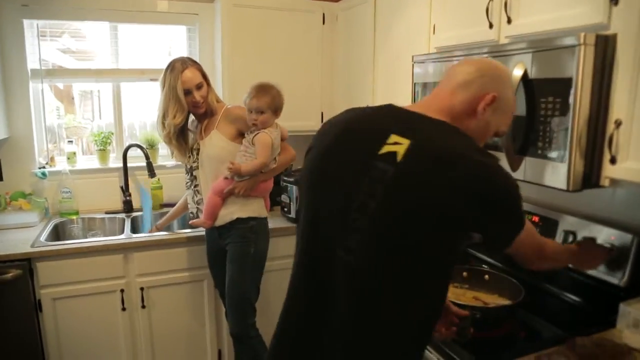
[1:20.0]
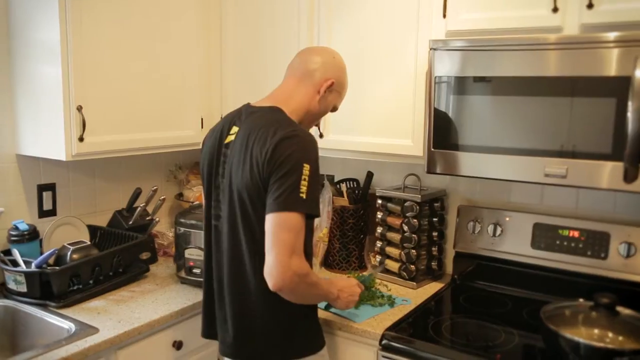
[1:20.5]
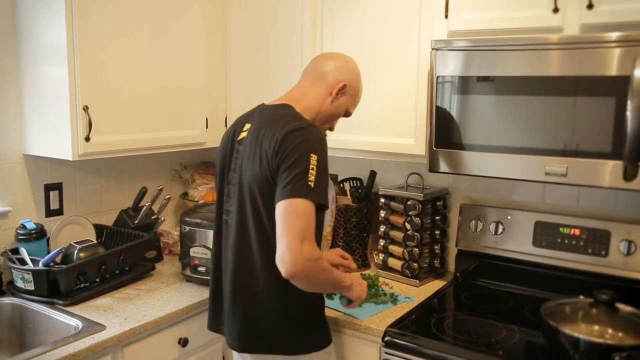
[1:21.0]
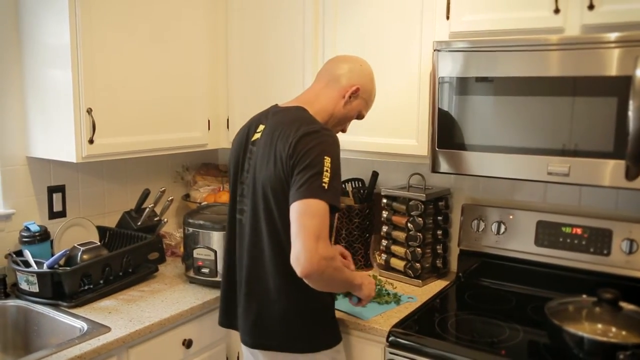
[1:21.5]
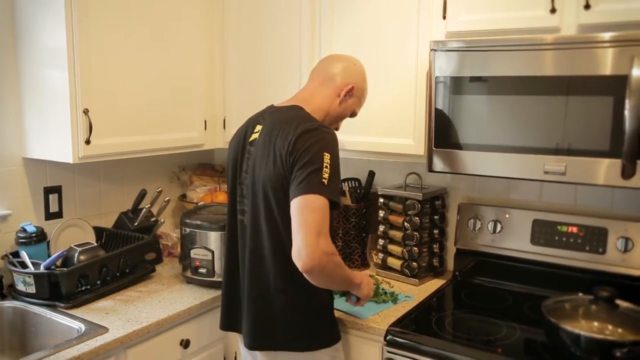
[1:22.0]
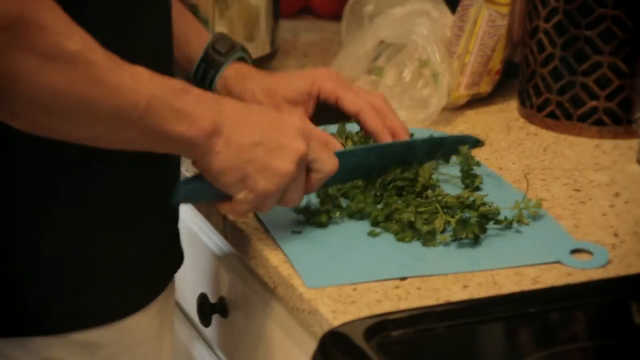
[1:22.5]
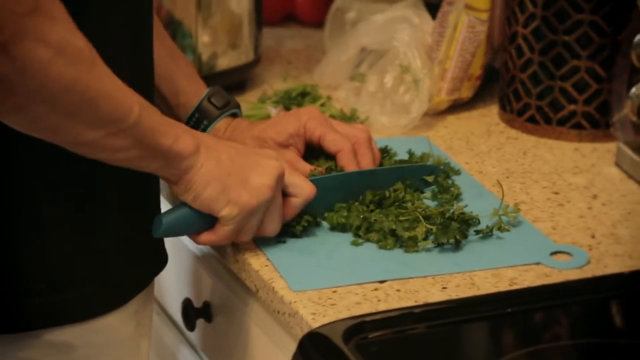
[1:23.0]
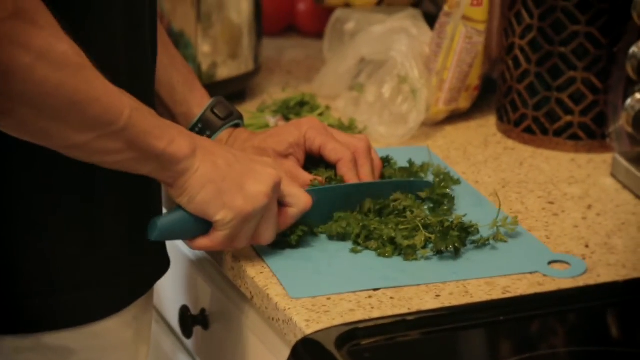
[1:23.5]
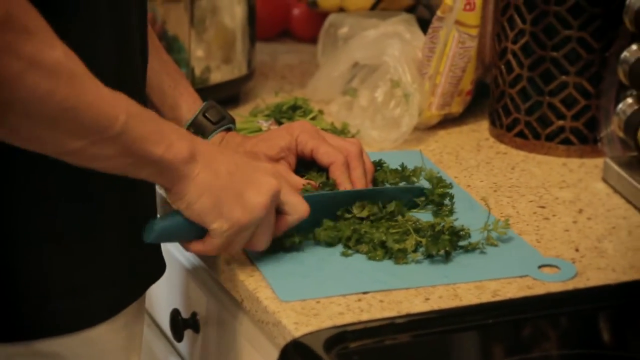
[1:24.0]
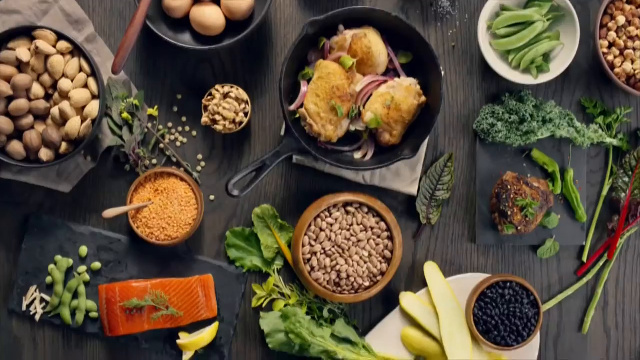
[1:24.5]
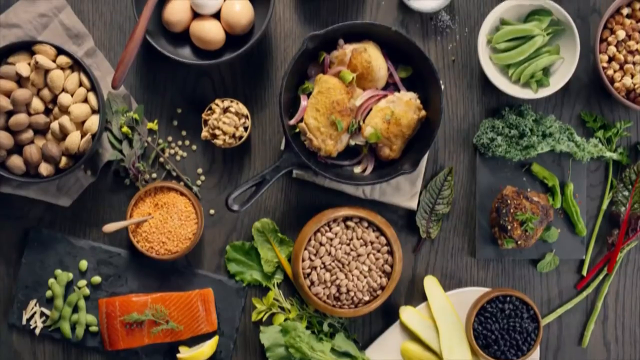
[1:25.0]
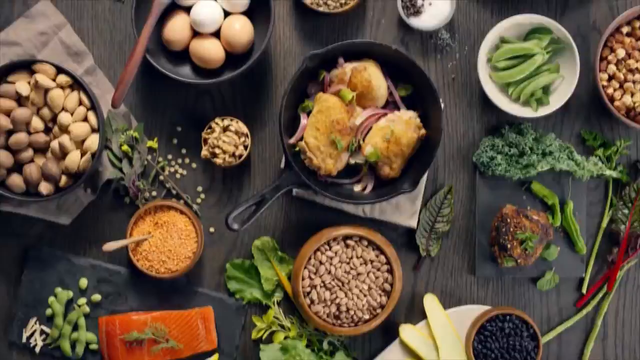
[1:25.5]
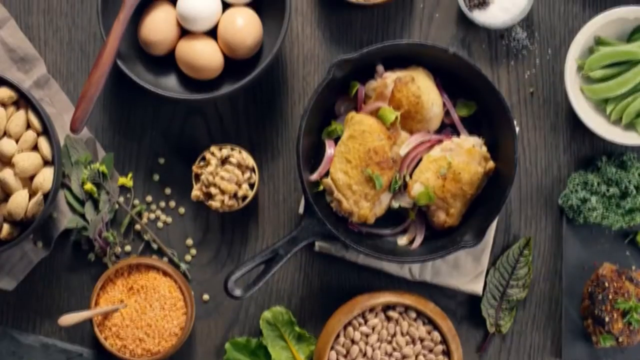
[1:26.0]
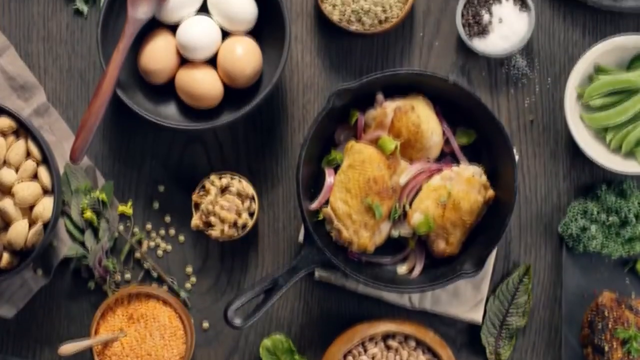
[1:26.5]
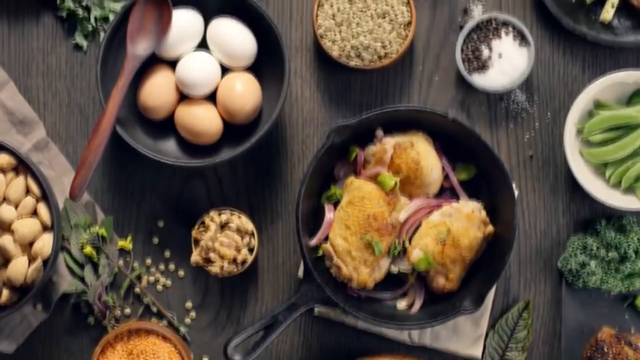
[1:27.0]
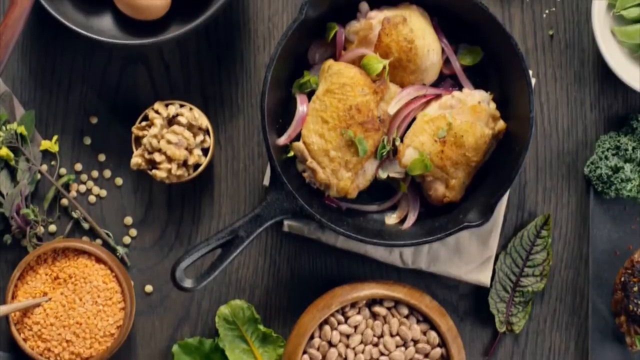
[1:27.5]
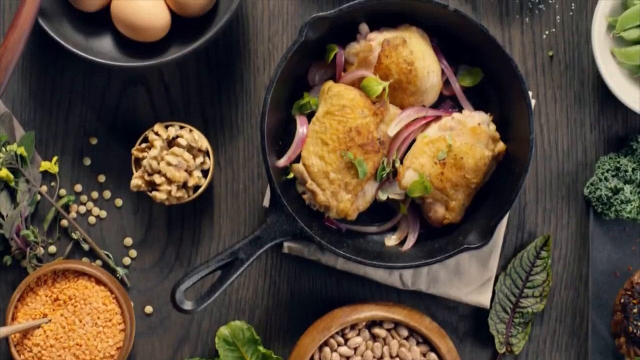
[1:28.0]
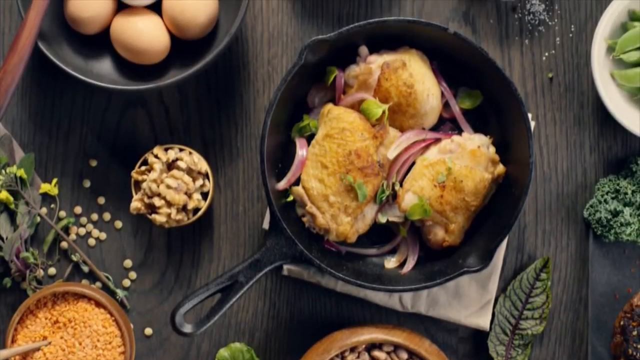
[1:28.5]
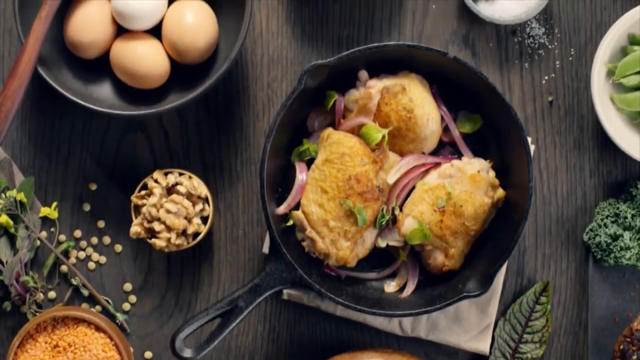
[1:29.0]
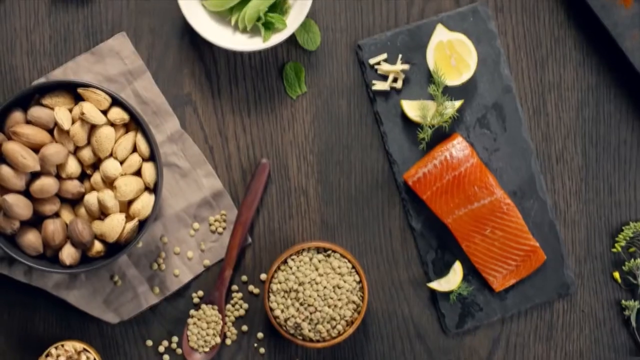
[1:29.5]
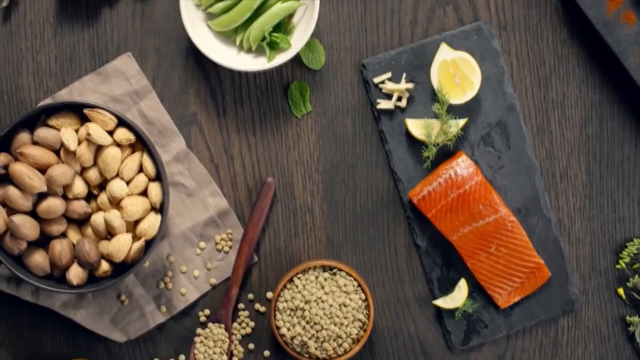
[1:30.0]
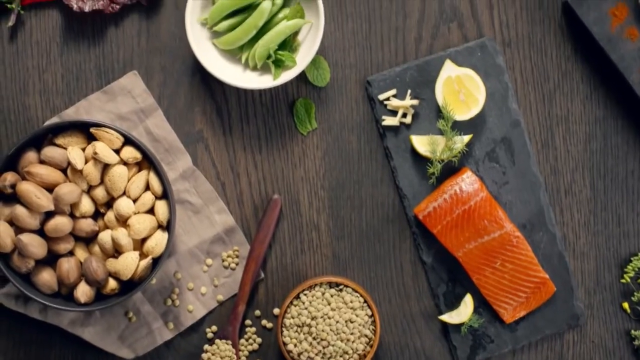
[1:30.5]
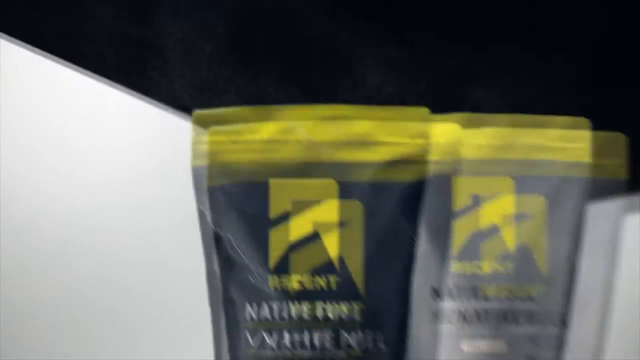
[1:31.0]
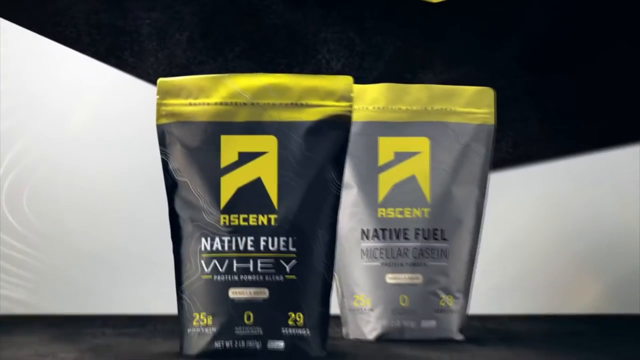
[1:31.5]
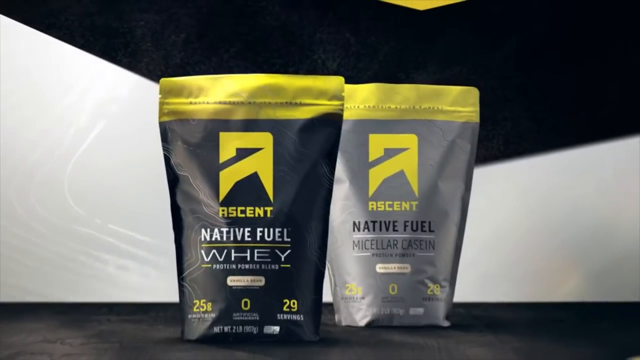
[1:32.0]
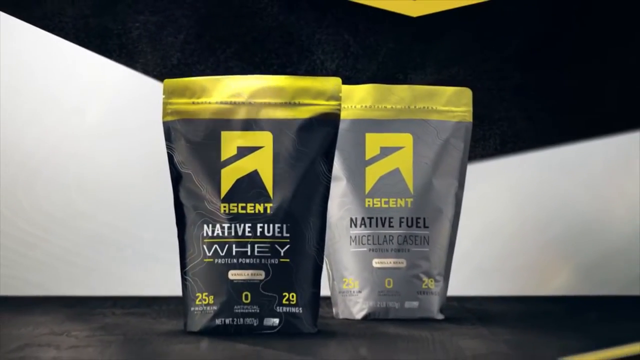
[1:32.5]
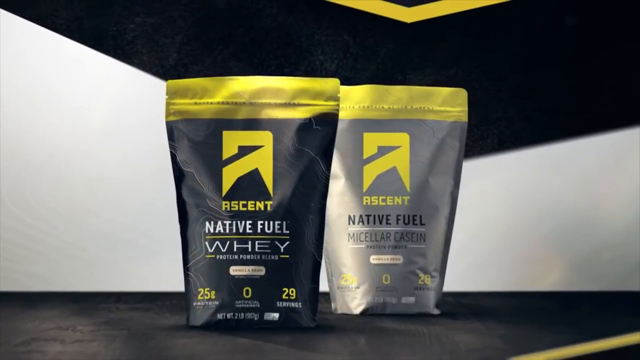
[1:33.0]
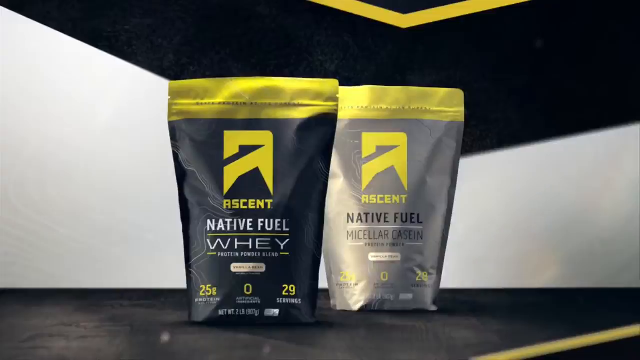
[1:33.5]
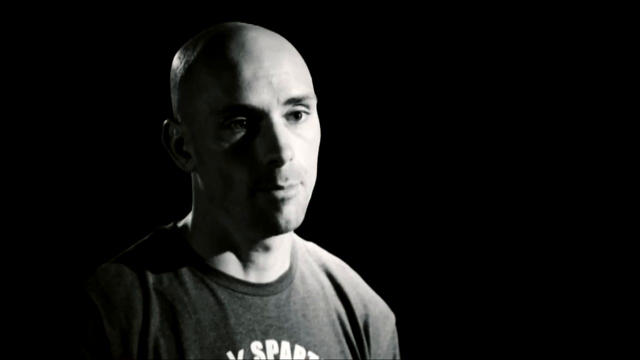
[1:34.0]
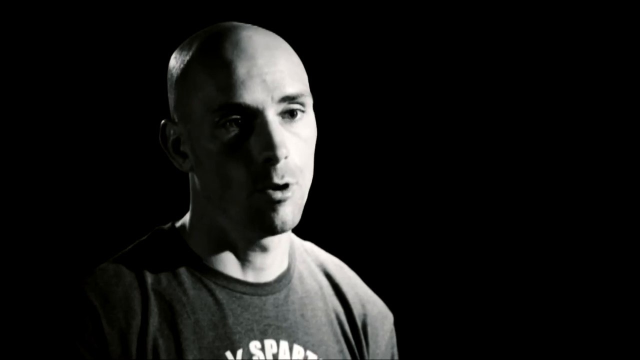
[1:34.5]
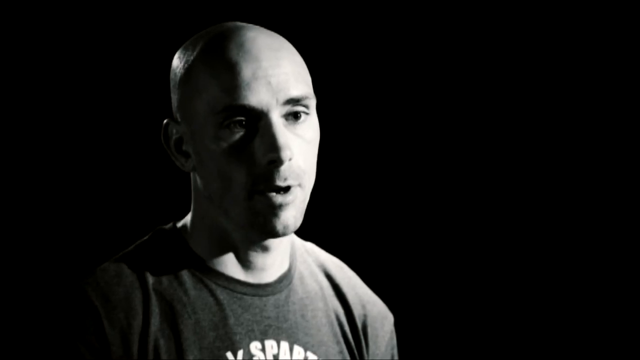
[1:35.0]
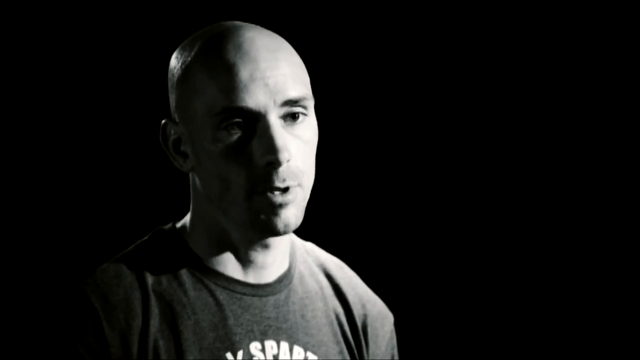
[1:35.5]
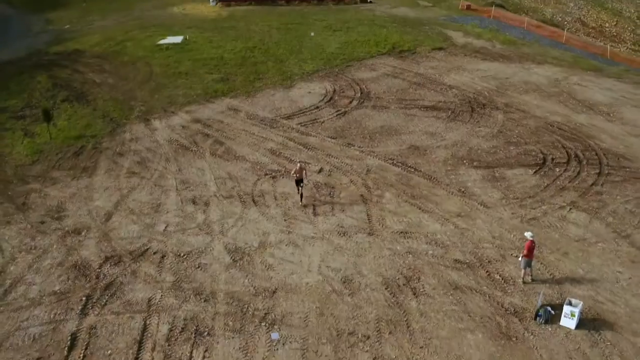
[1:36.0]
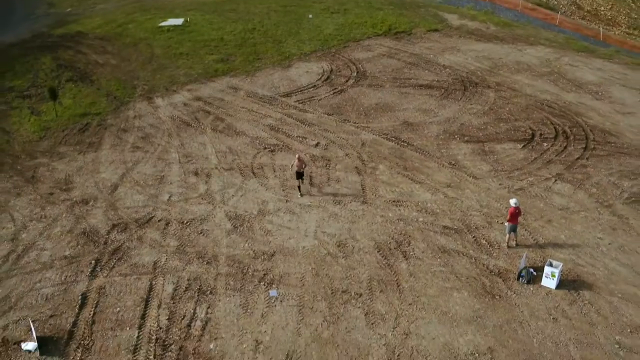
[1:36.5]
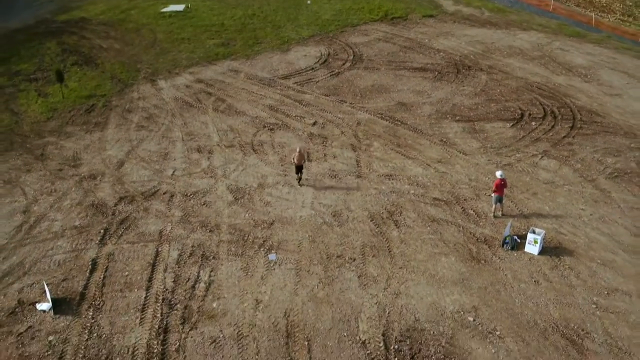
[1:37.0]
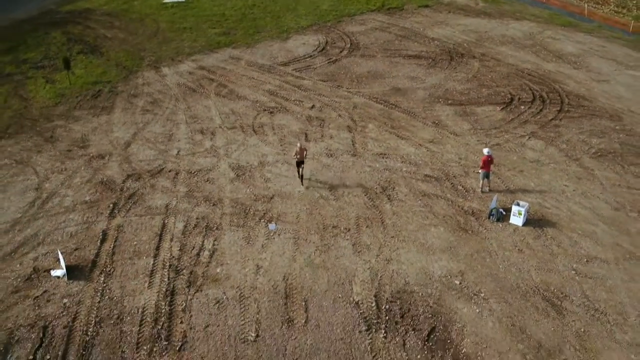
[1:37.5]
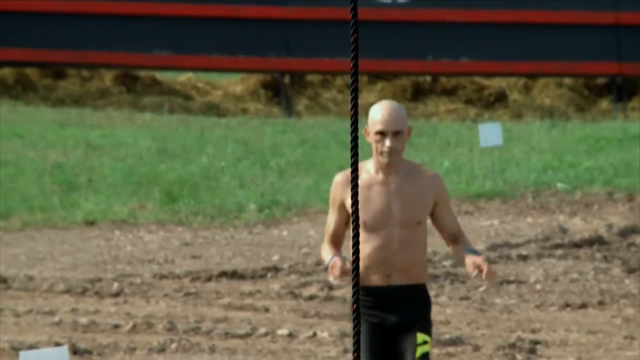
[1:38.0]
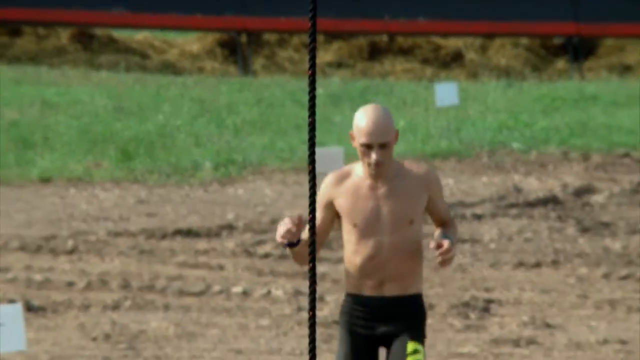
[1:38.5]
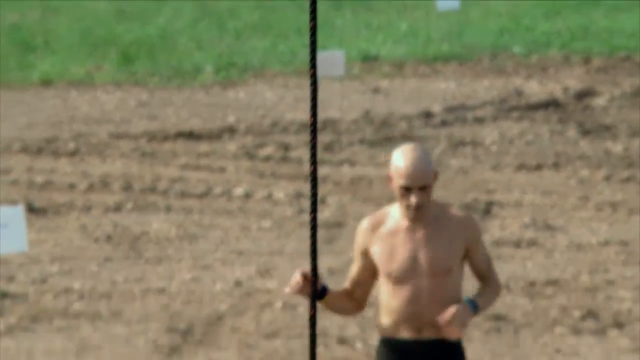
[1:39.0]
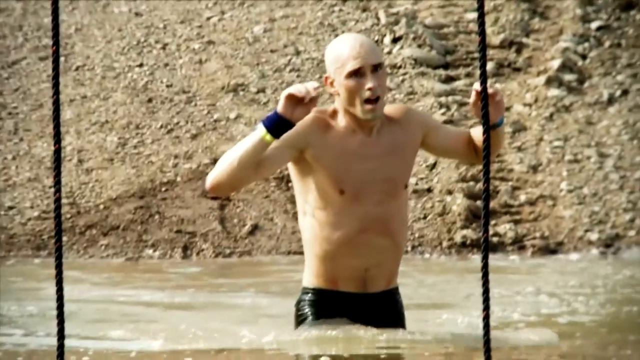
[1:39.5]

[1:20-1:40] In the athlete's kitchen, he chops something green, apparently green vegetables of some sort, on a chopping board with the knife in his right hand, seen from behind. A high overview shows a table with different foods in different bowls: eggs, nuts, what looks like chicken, and some peas, as the camera moves up gradually to reveal more of the table. Against a black and white background, a picture shows two whey protein packages; the company producing them looks to be Ascent. The one on the left looks to be whey protein and the one on the right appears to be a casein protein. The camera flashes and then gradually moves away or zooms out. A quick chest-up interview of the racer talking follows, then a high overview of him running, and finally he is in some water, gradually going through it.